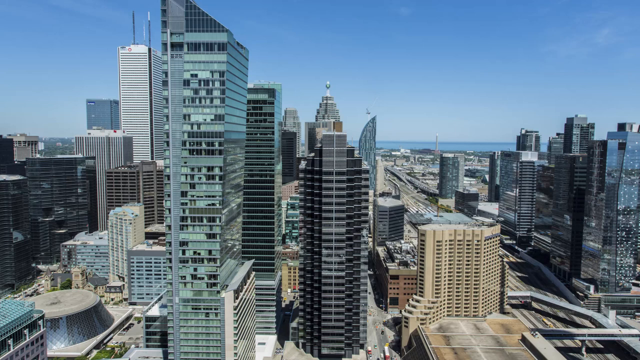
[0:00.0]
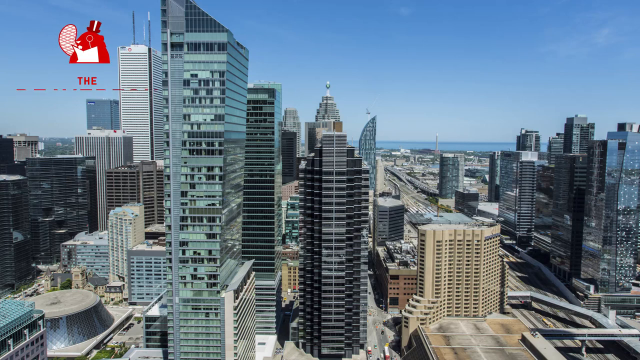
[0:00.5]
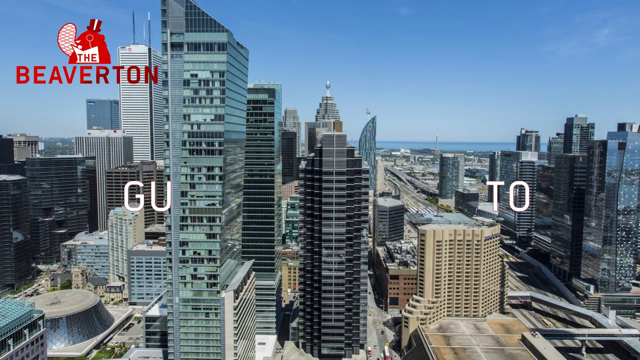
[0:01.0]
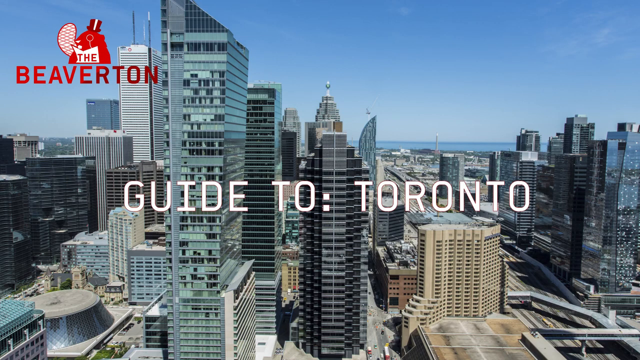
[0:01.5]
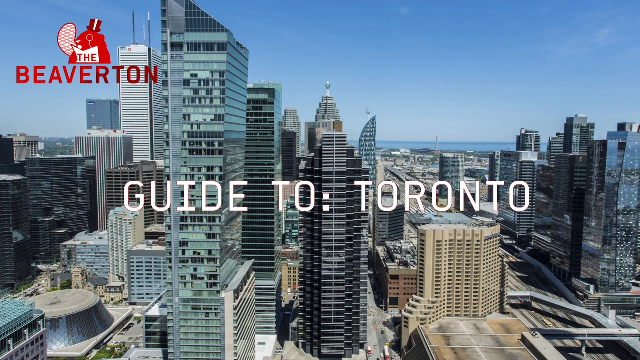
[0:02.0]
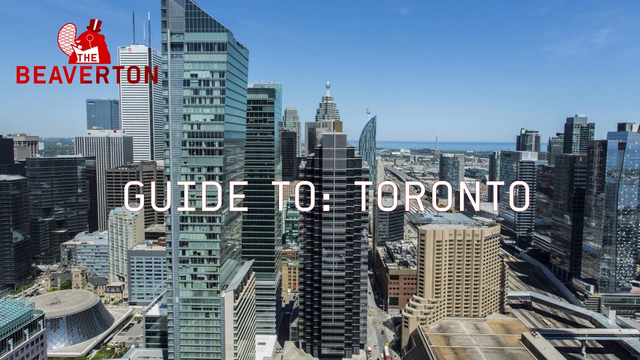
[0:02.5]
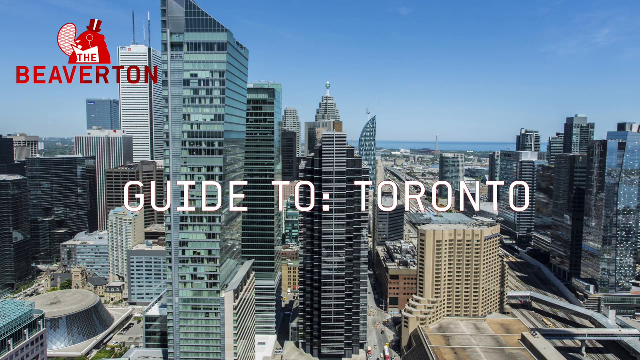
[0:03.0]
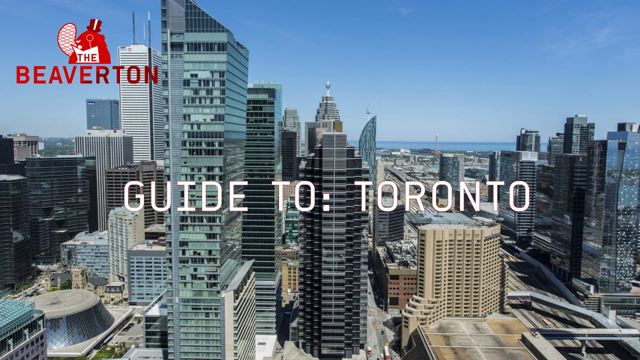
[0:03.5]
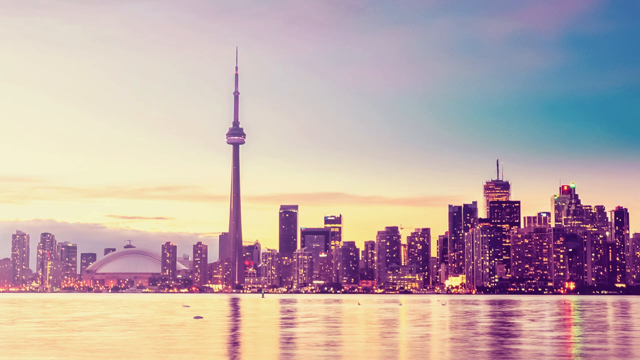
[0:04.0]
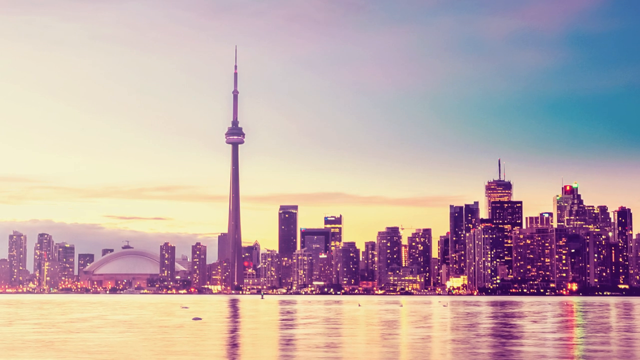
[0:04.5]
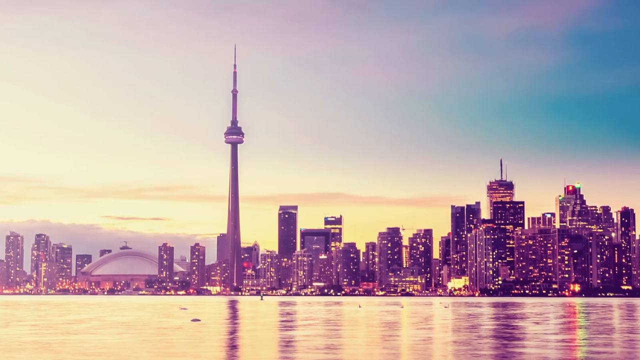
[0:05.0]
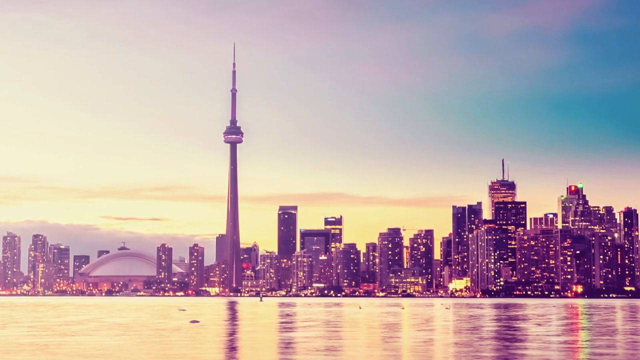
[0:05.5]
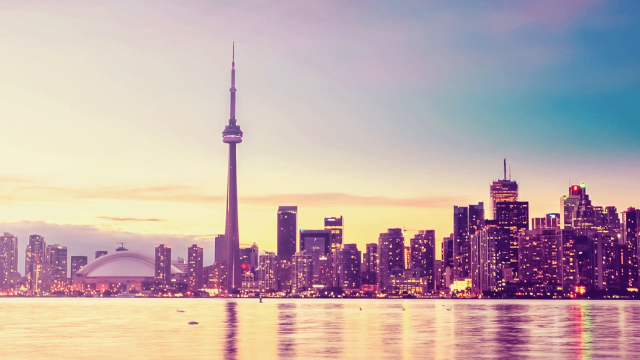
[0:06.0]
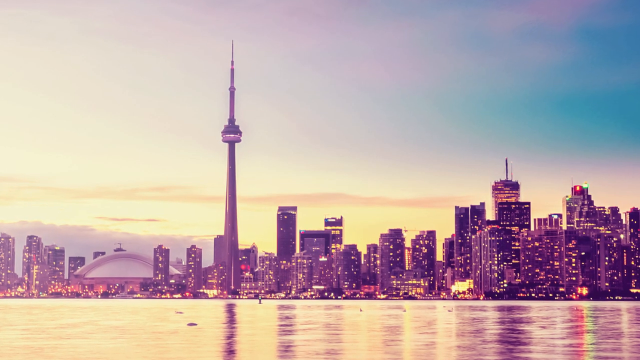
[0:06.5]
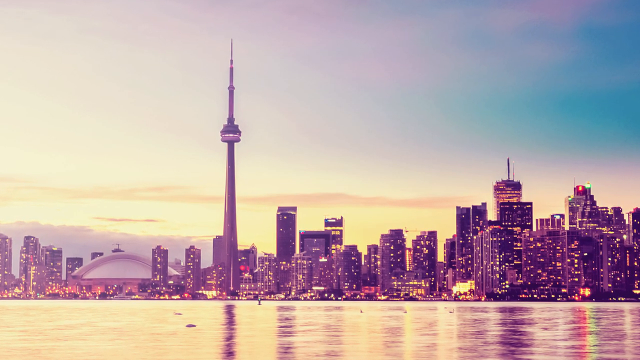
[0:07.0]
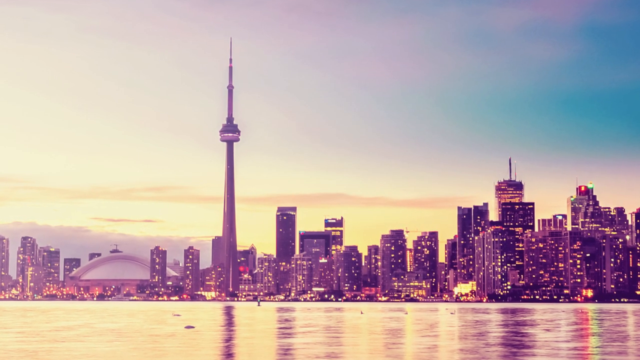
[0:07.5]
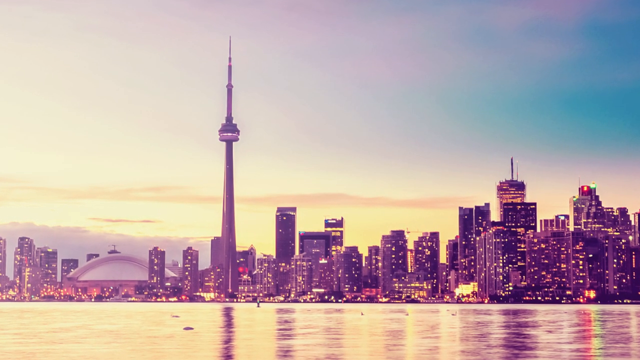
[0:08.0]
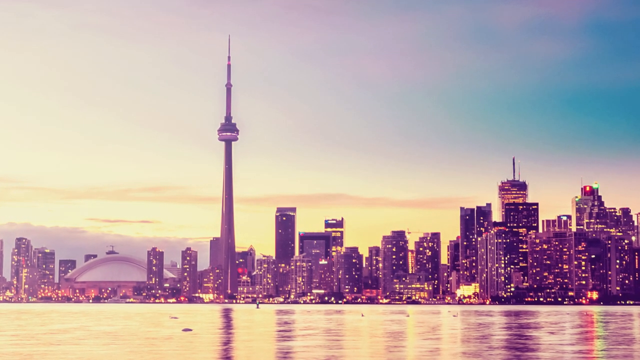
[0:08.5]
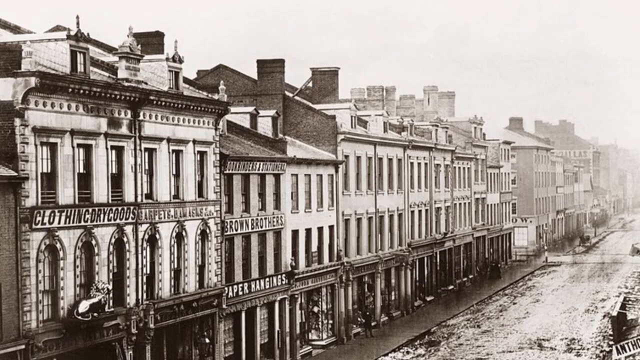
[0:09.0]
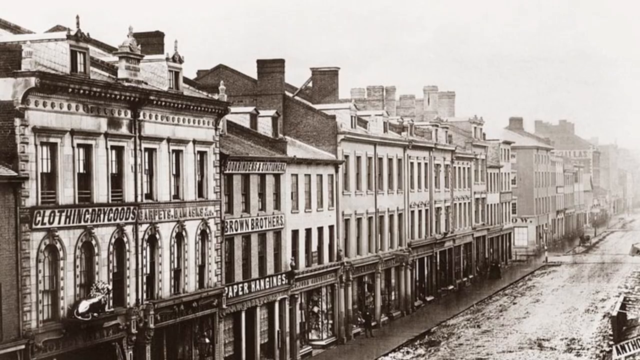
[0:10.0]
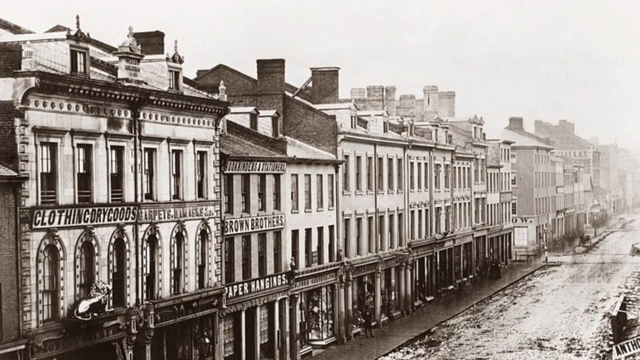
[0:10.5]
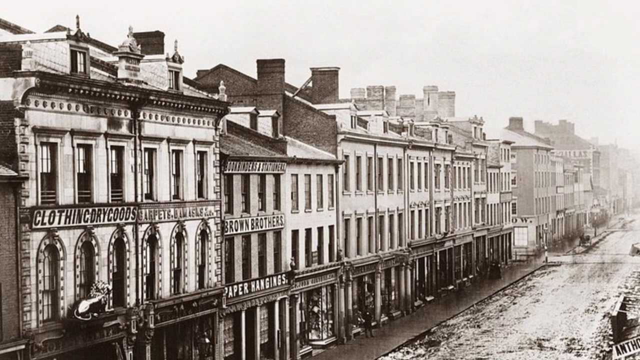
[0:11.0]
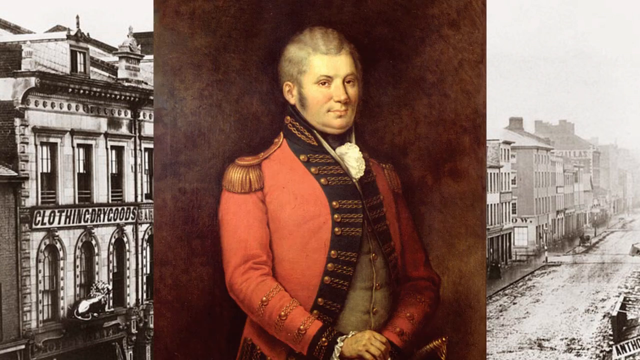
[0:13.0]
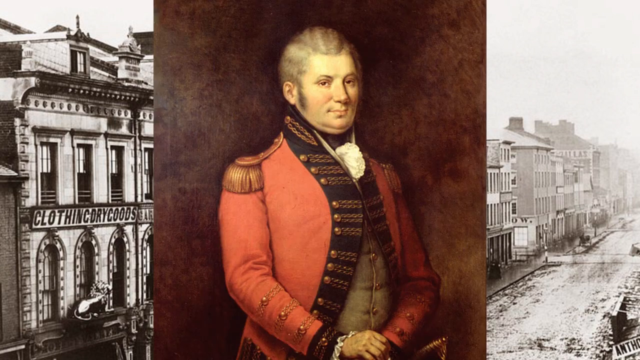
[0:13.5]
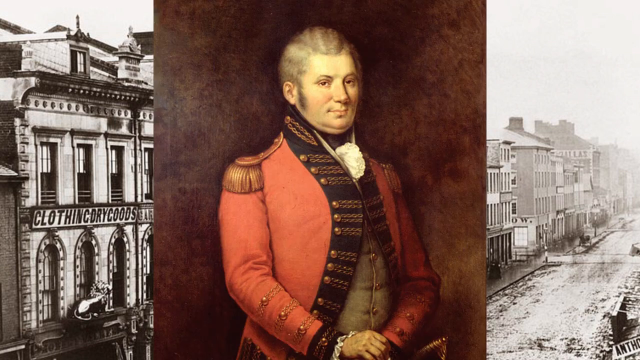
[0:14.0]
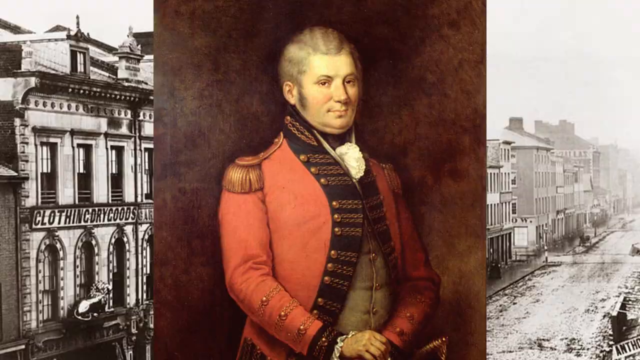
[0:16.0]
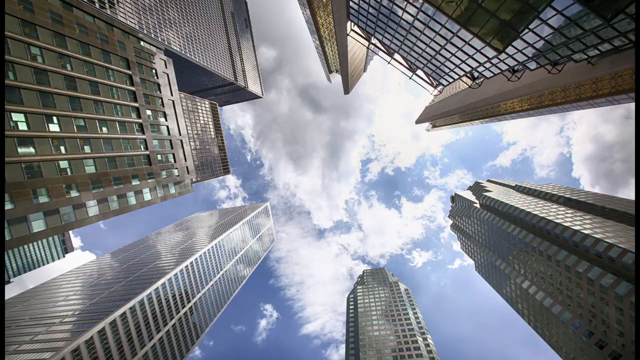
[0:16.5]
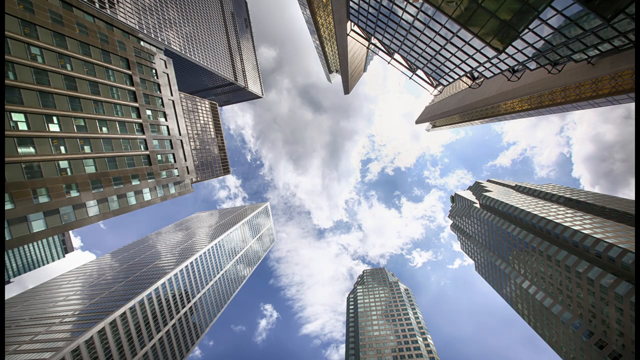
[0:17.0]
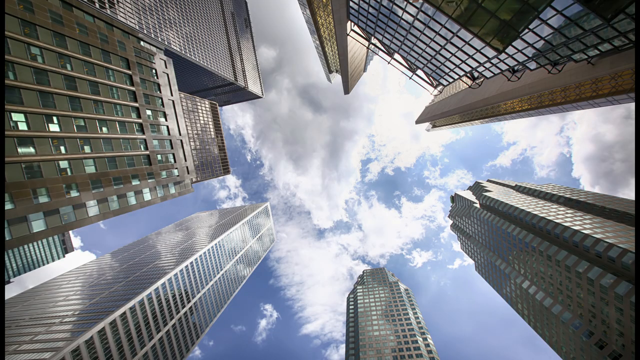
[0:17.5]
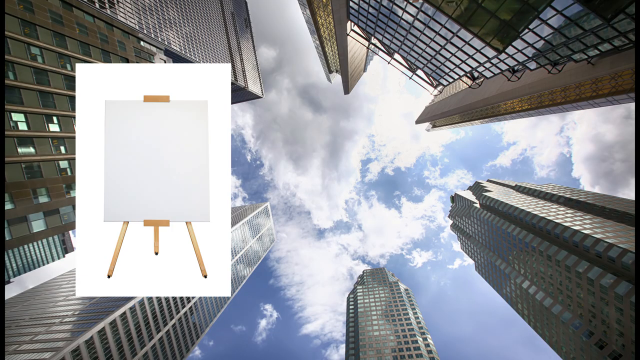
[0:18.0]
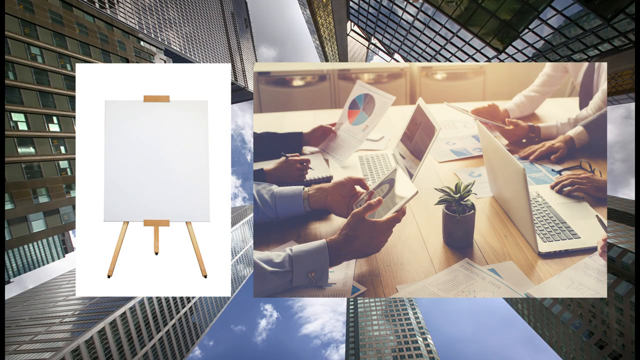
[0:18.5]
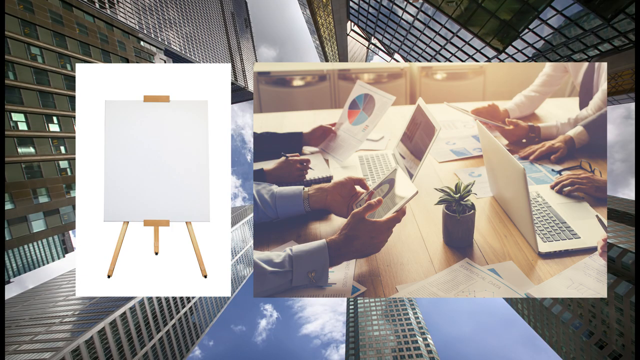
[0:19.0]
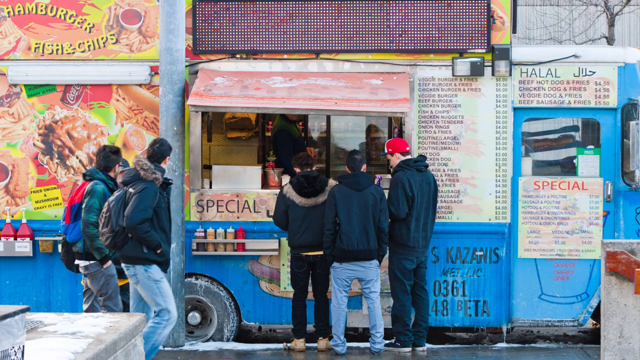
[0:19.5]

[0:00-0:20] In the top left corner of the screen is an icon that looks like a beaver, in white on a red background, with text that says "the Beaverton." In the middle of the screen, "guide to Toronto" is written in white. The scene changes to a very tall tower and a city with lots of skyscrapers in a purple color, with the reflection of the ocean in the river. Next come some buildings that look like they are from way back, with various labels such as "clothing," "goods" and "brown brothers." A picture follows of someone from way back wearing a red army suit. Then there are two frames: one of a white paper board, and the other of hands holding tablets, one holding a paper and one placed on a laptop.